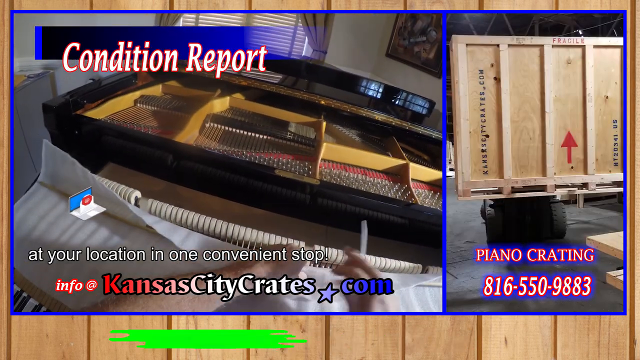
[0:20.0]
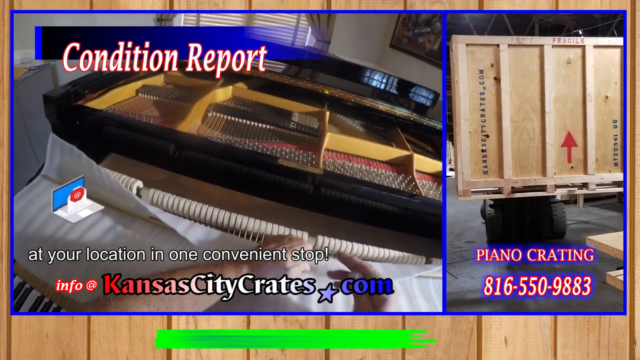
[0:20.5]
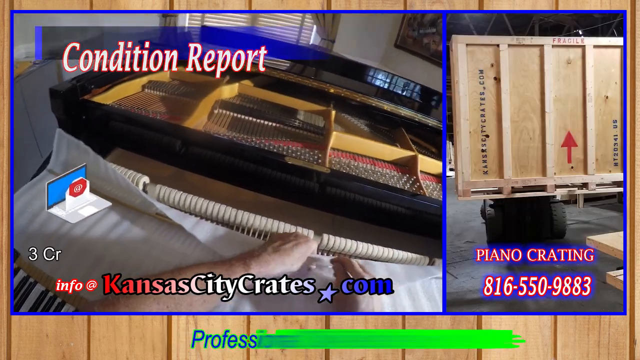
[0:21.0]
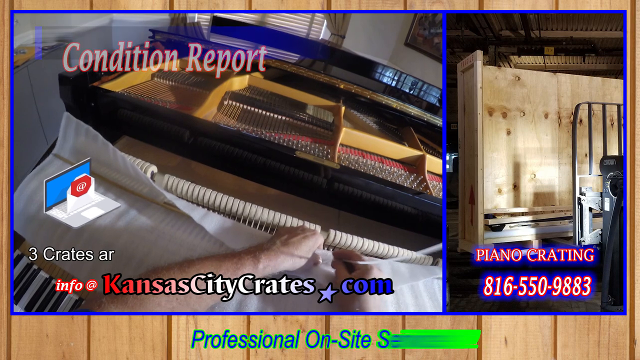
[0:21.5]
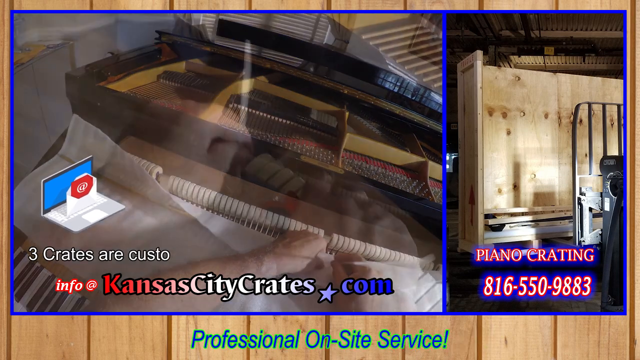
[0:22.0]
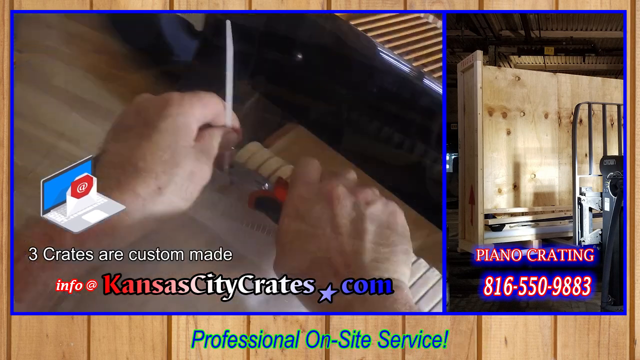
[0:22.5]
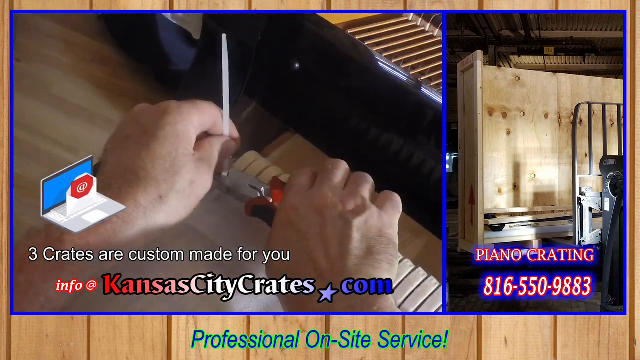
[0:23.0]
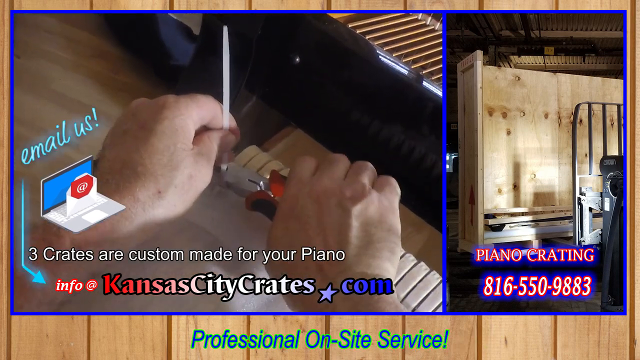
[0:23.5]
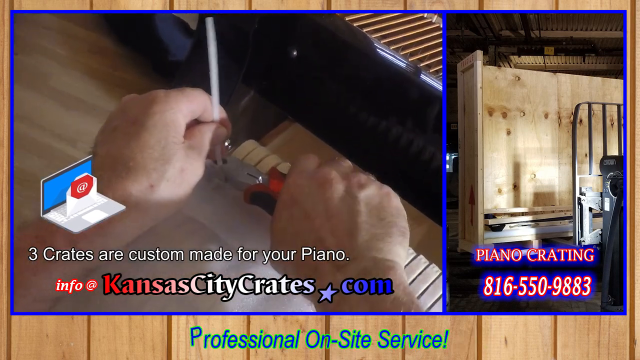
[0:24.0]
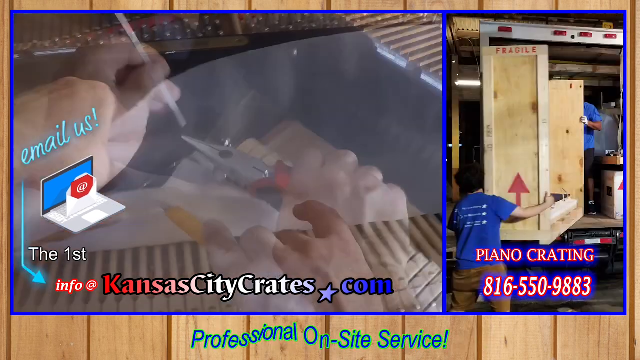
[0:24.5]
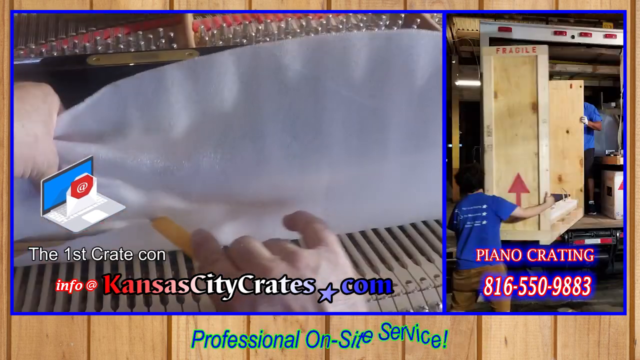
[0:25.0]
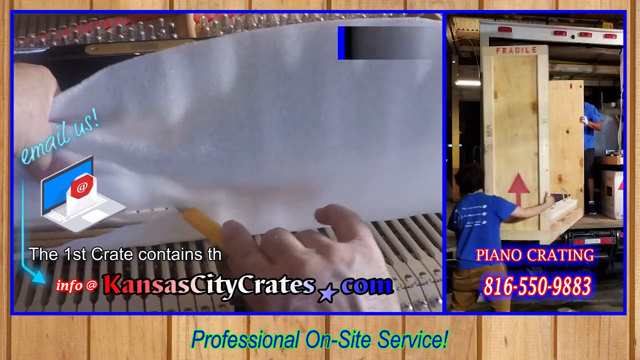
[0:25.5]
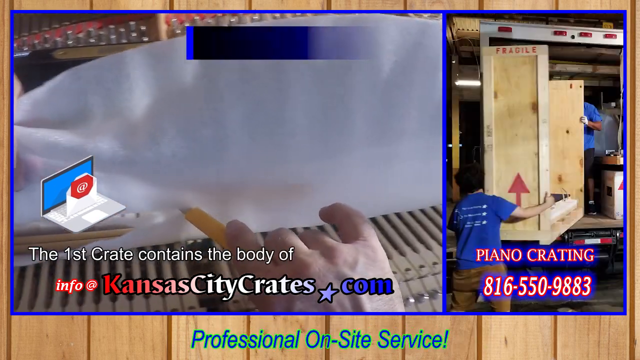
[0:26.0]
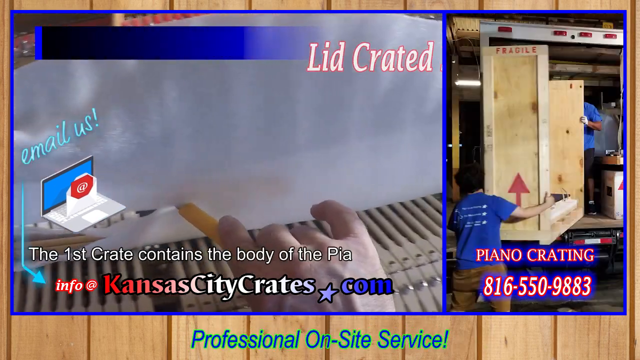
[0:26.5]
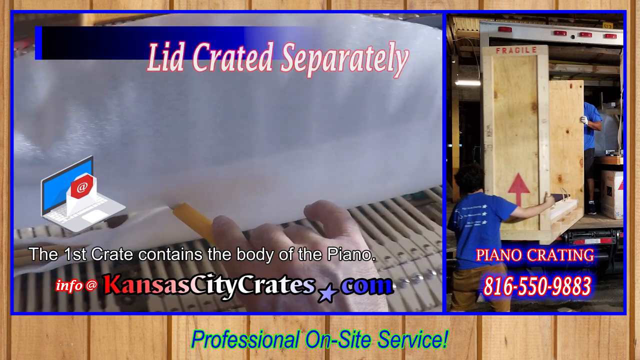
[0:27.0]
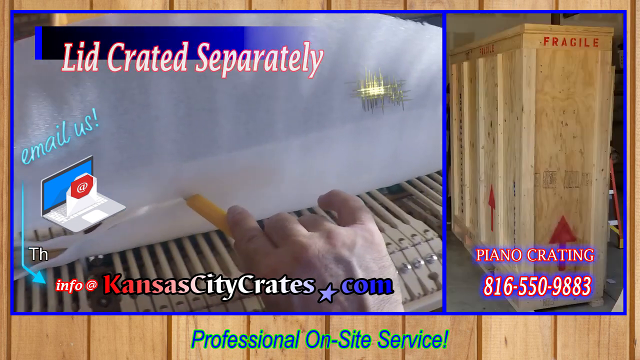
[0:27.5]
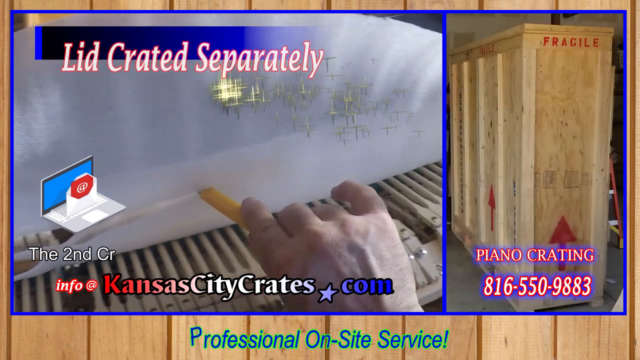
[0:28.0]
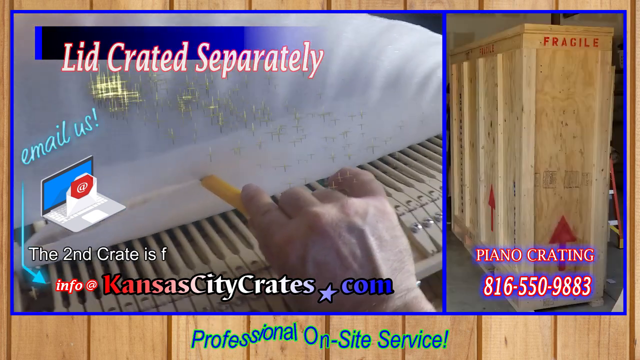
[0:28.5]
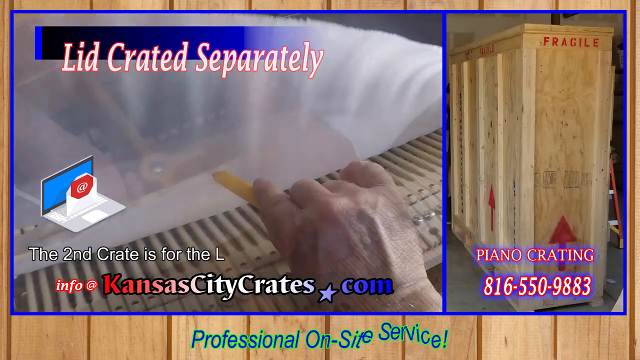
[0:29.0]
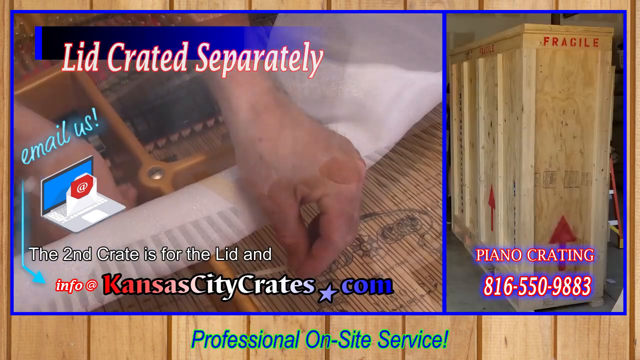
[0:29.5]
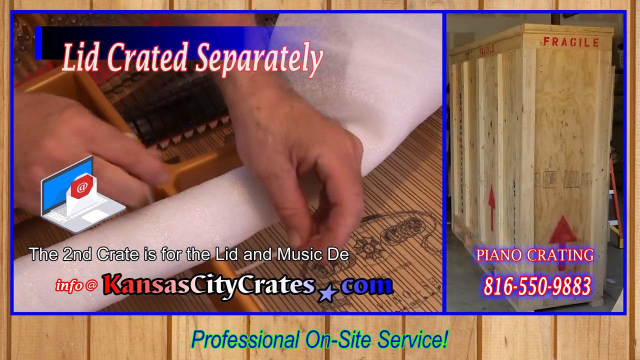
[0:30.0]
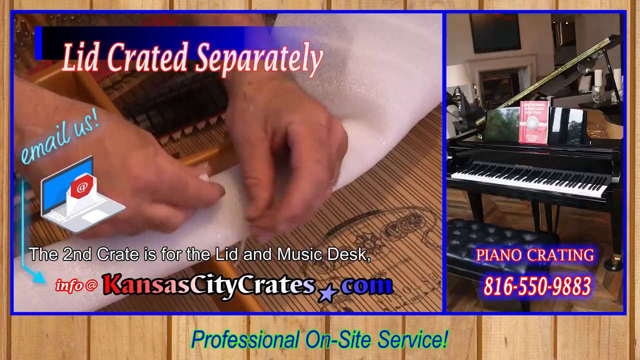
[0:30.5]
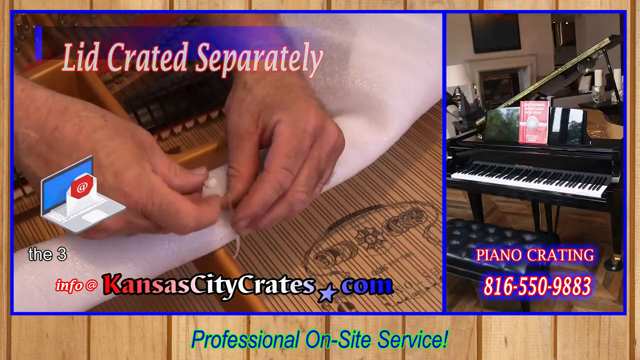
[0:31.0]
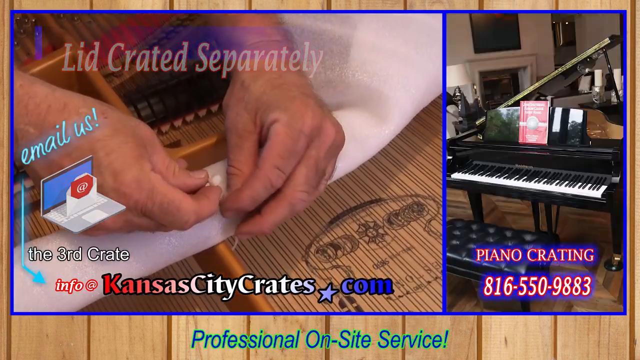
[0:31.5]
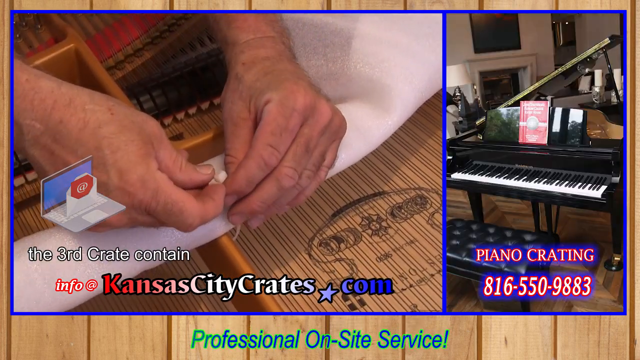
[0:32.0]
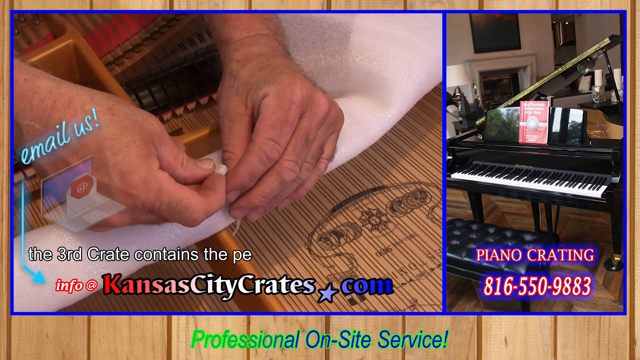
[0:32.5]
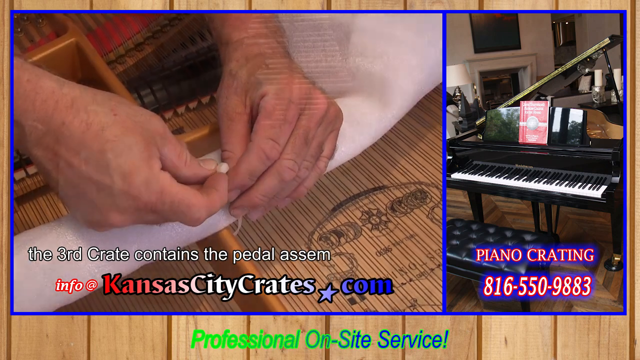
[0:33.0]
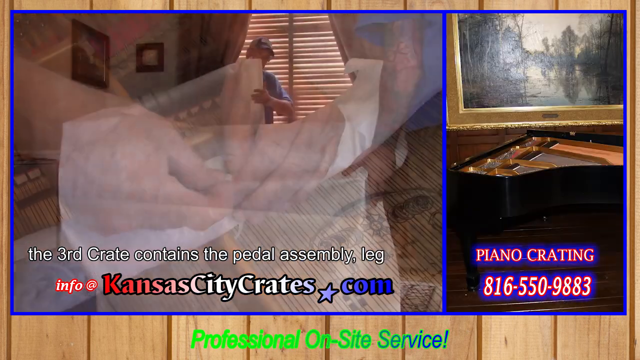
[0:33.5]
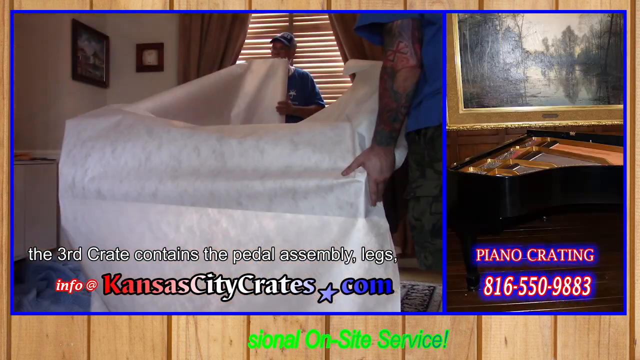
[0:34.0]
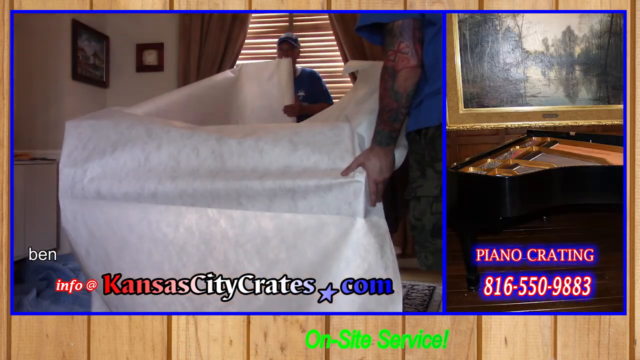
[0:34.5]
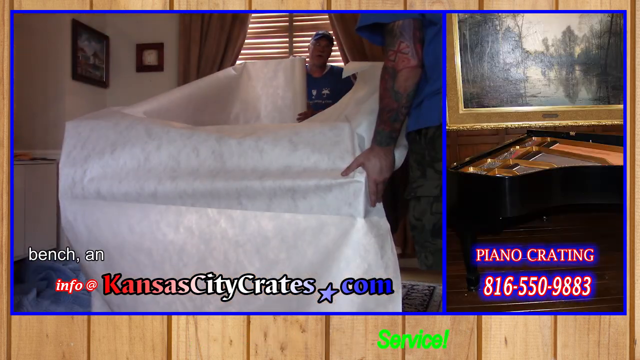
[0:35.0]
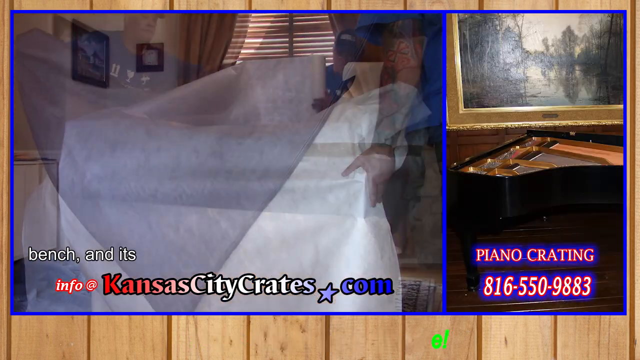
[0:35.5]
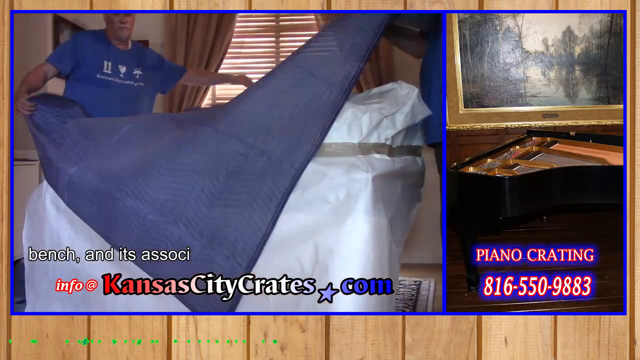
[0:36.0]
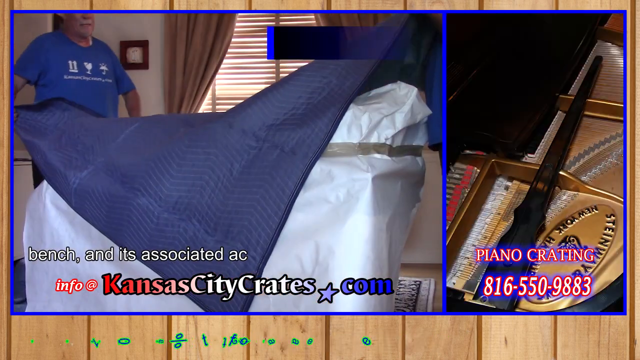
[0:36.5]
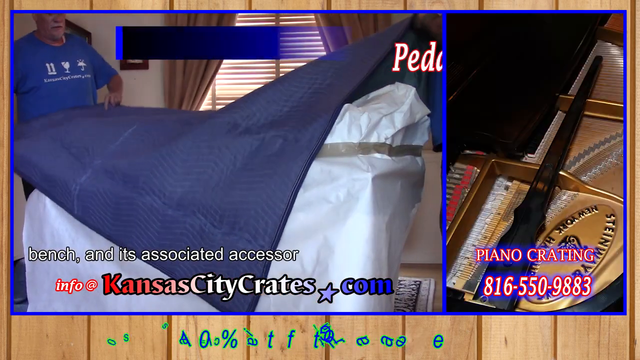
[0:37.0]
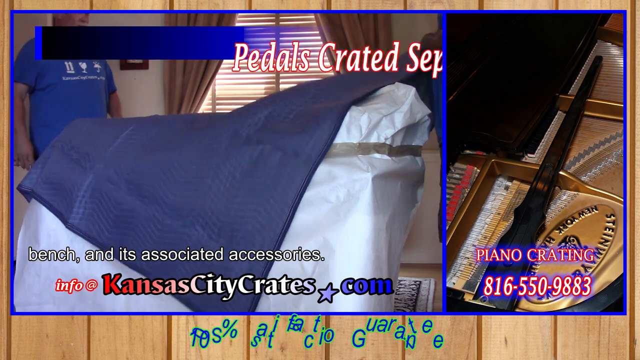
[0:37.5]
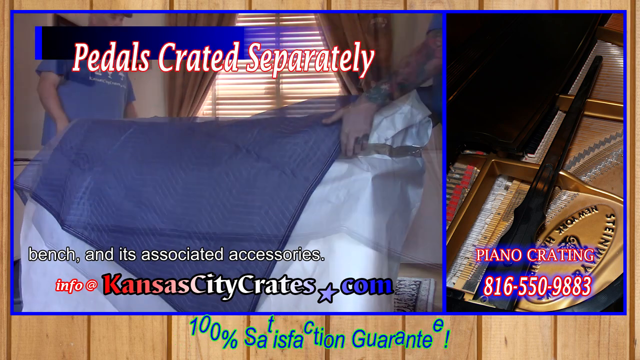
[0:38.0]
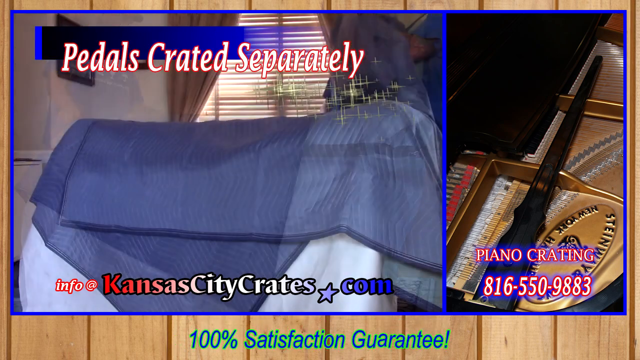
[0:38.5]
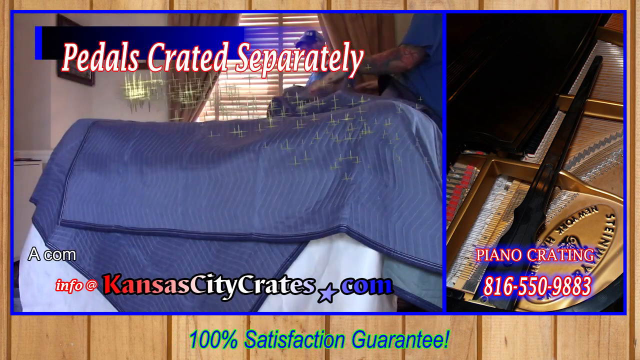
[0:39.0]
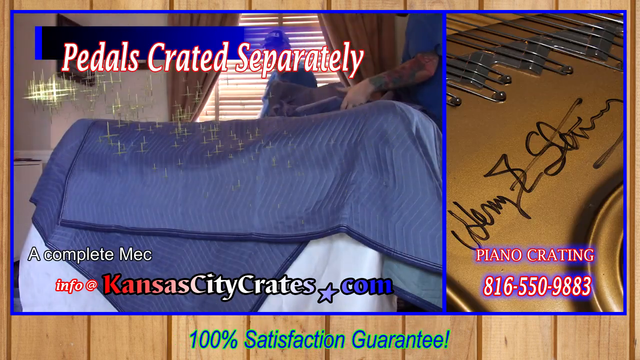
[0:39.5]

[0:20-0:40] A pair of white male hands take apart a piano. A cartoon laptop picture appears with the text "Email us!" Text reads "crates are custom made for your piano," and to the right is text reading "piano crating" with the phone number 816-550-9883. The man continues taking the piano apart and appears to cut a piece of plastic. Text reads "the lid of the piano is crated separately." His hands tie a zip tie around a piece of plastic. Next, two men in blue shirts, one also wearing a blue hat, are both standing next to the piano, packaging it up. They put two blankets on top of the piano. Text reads "the pedals are crated separately."